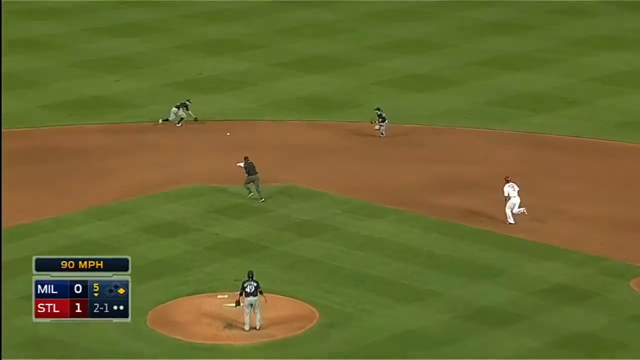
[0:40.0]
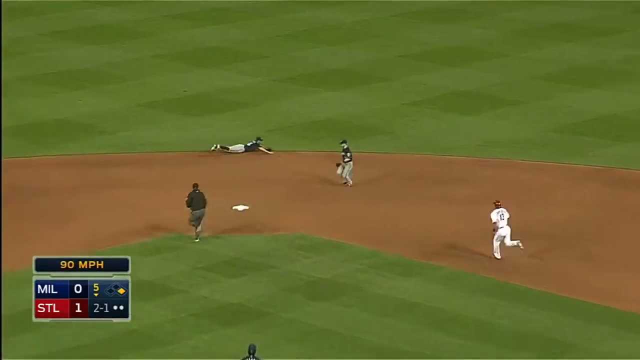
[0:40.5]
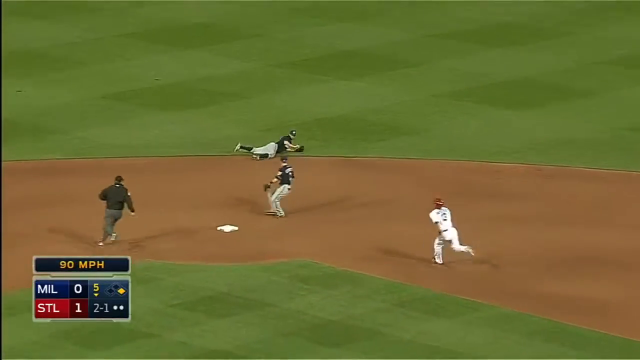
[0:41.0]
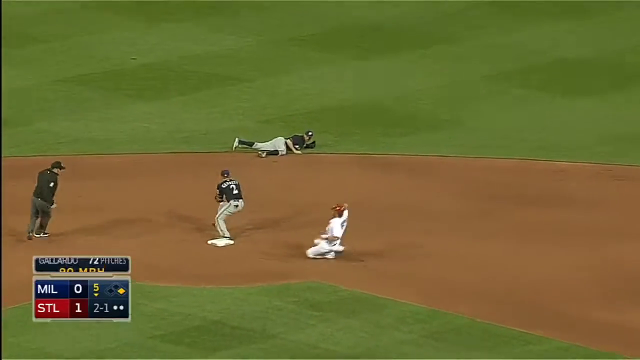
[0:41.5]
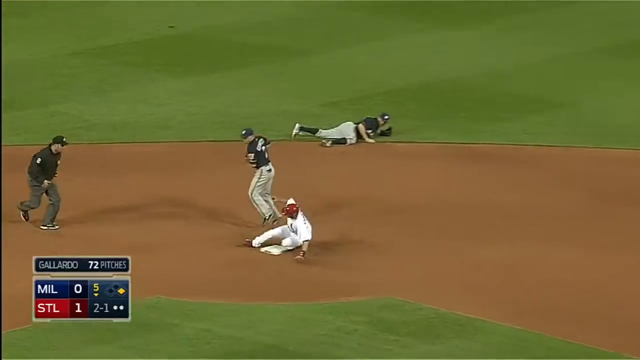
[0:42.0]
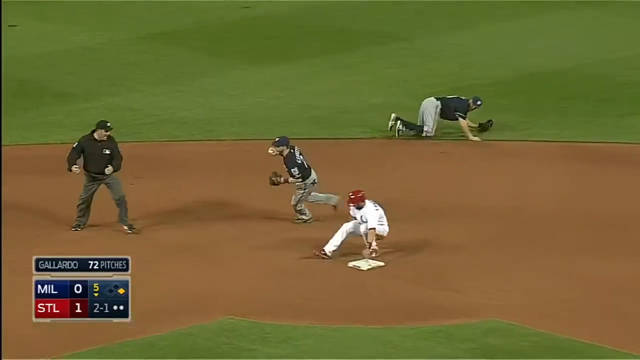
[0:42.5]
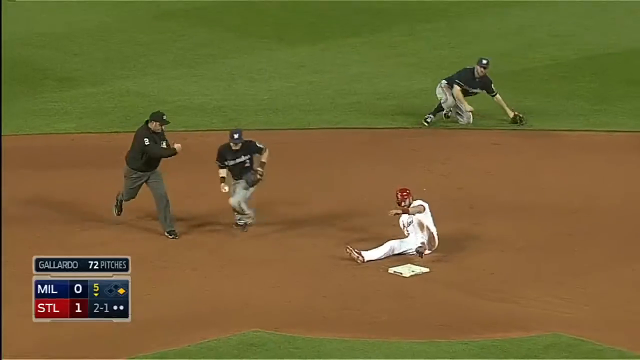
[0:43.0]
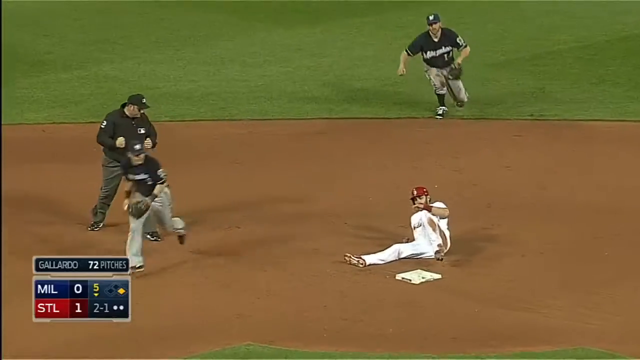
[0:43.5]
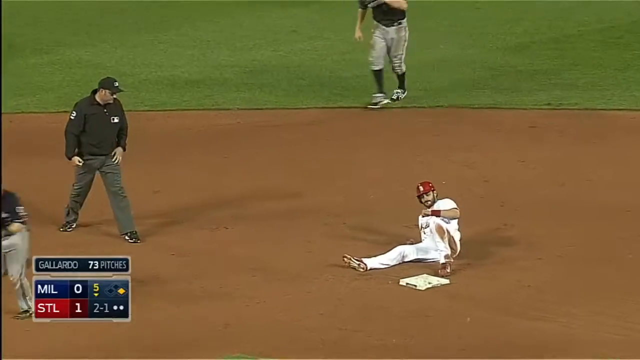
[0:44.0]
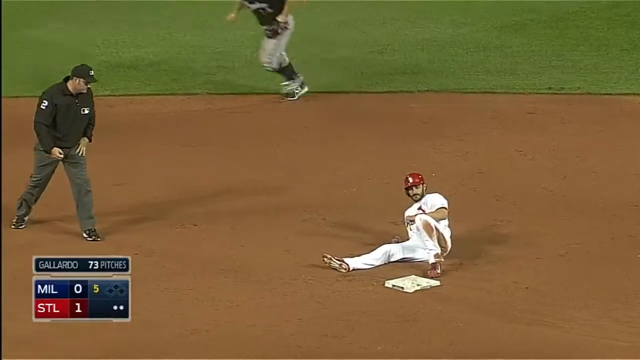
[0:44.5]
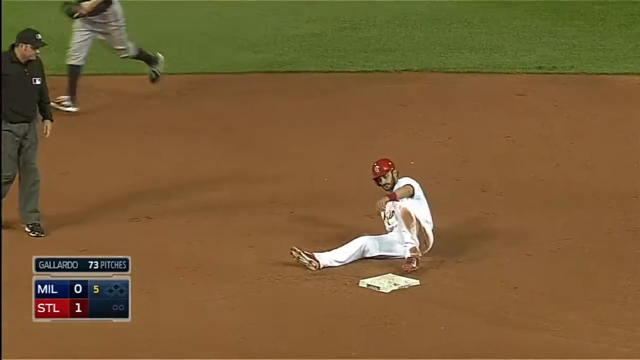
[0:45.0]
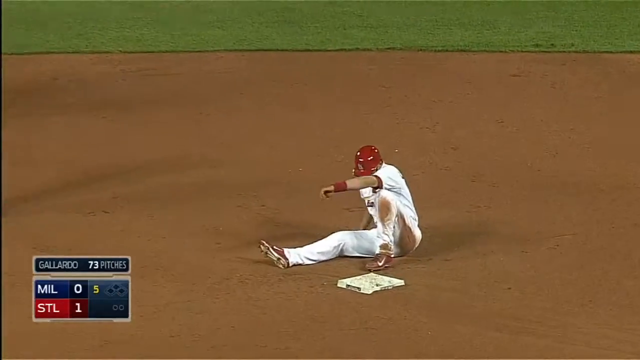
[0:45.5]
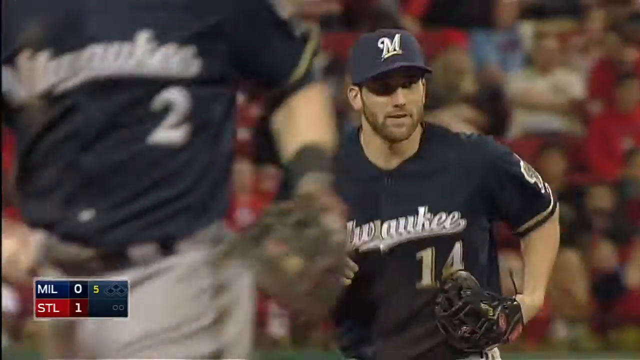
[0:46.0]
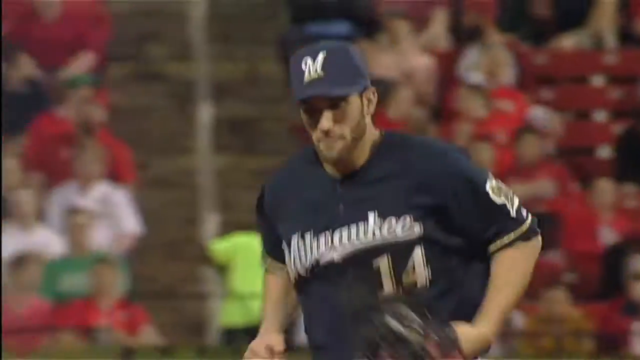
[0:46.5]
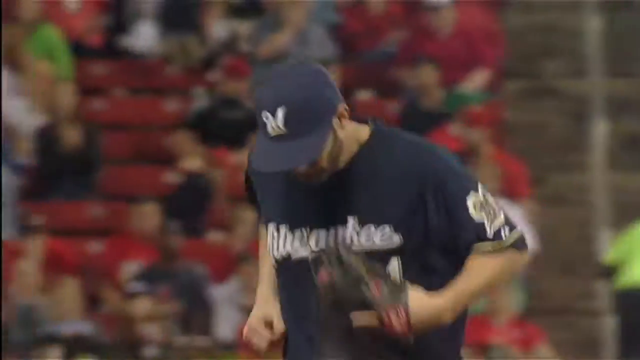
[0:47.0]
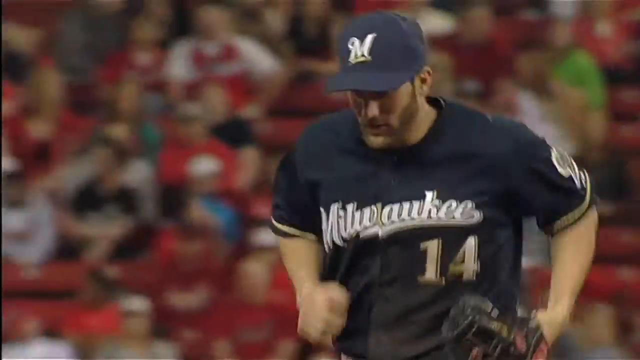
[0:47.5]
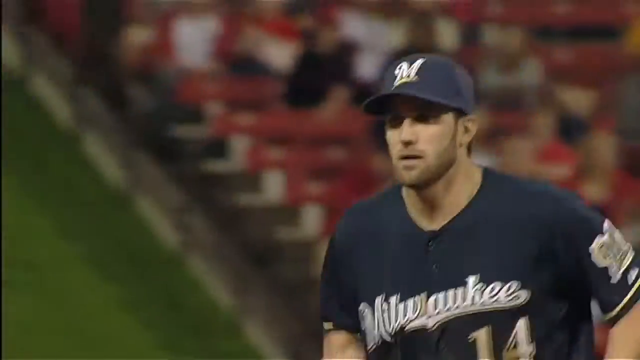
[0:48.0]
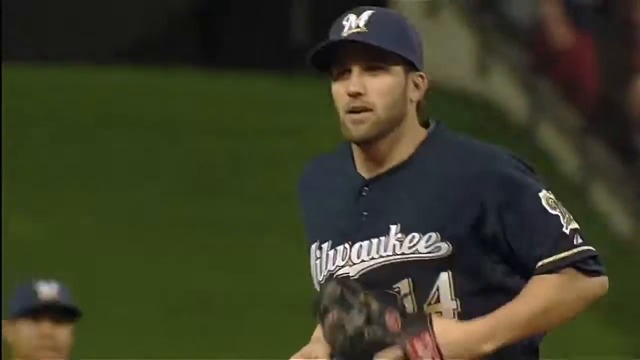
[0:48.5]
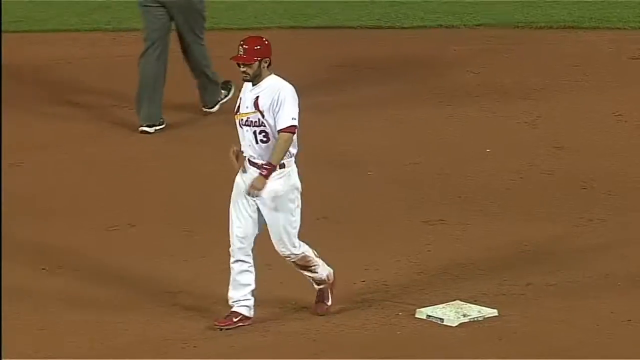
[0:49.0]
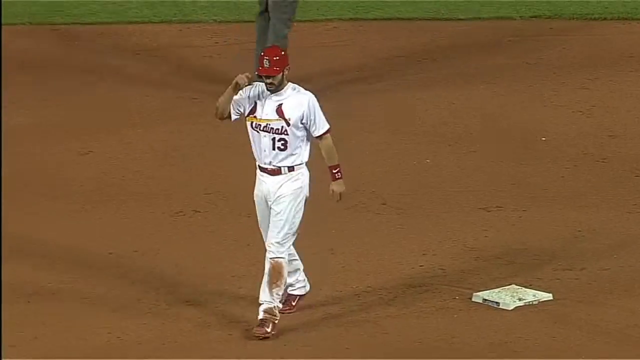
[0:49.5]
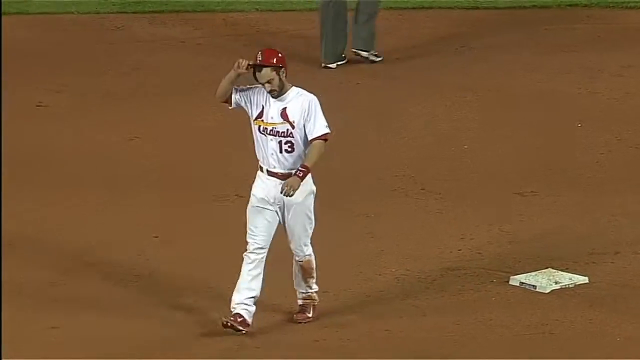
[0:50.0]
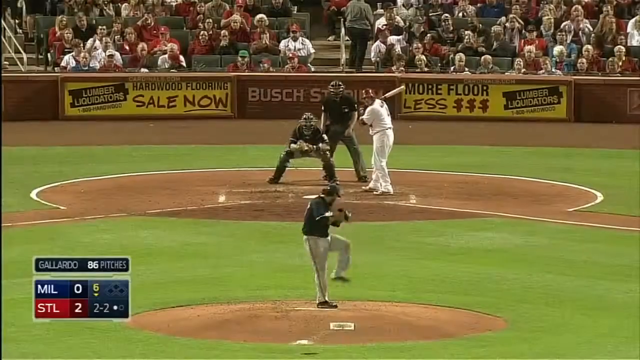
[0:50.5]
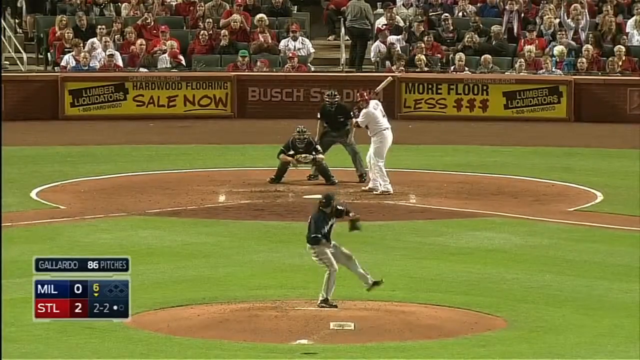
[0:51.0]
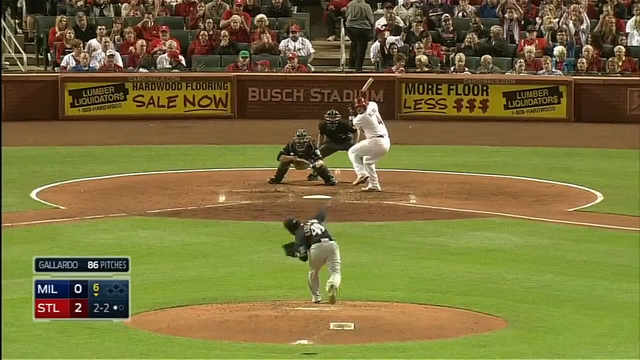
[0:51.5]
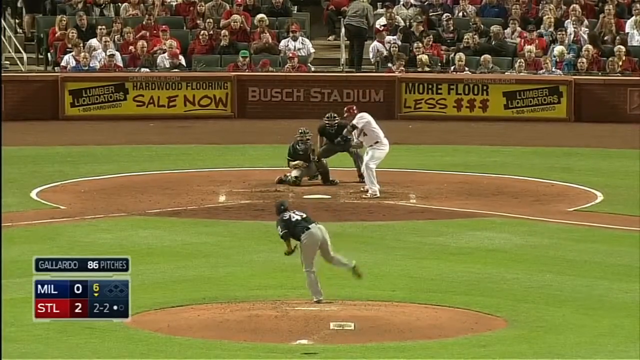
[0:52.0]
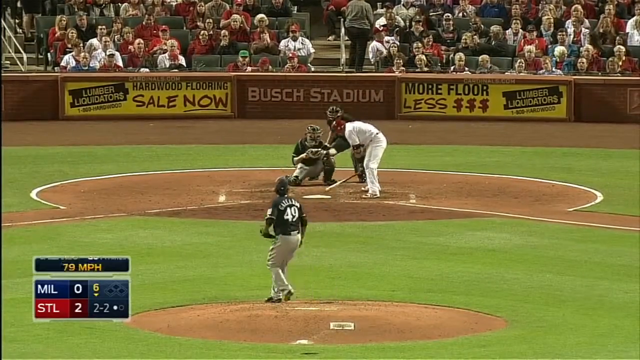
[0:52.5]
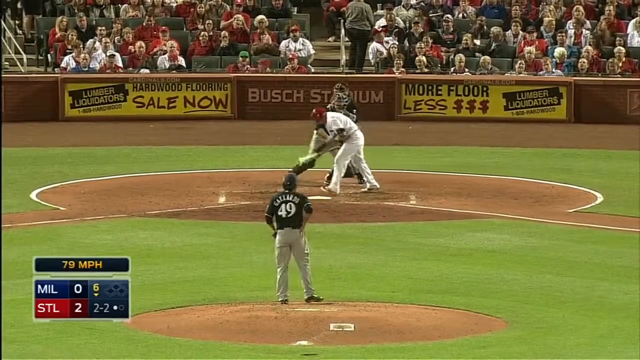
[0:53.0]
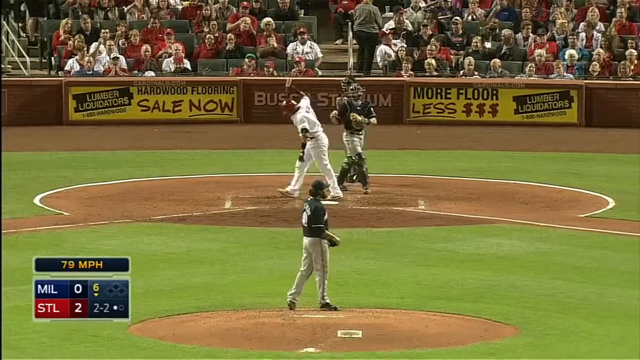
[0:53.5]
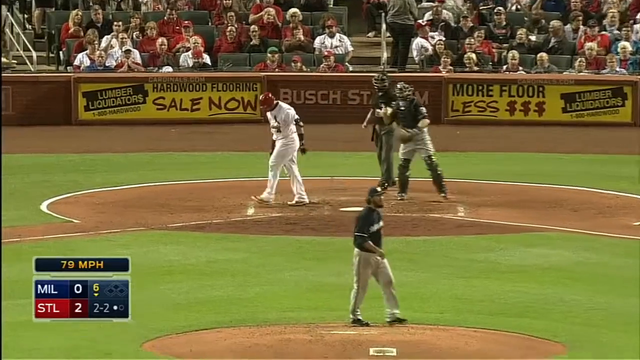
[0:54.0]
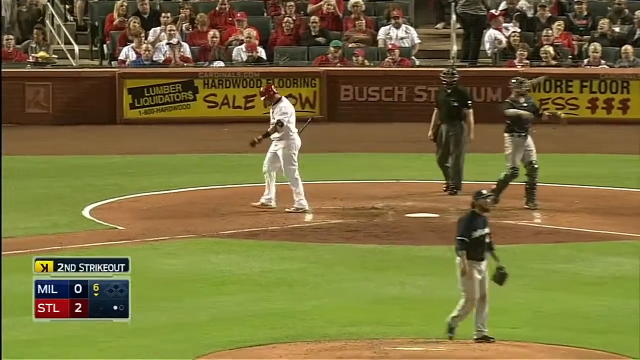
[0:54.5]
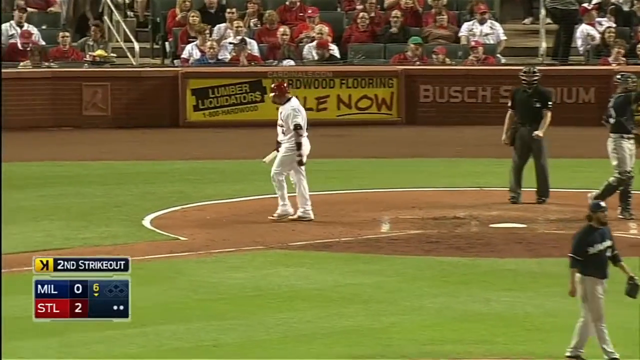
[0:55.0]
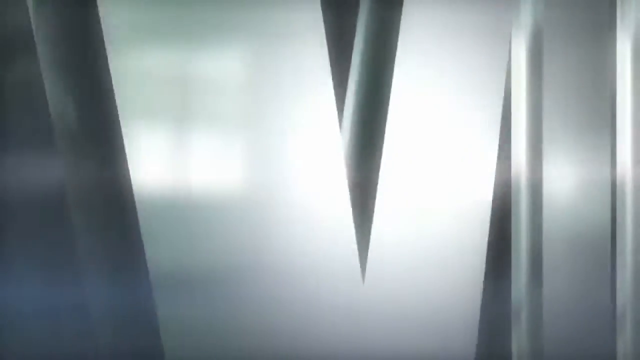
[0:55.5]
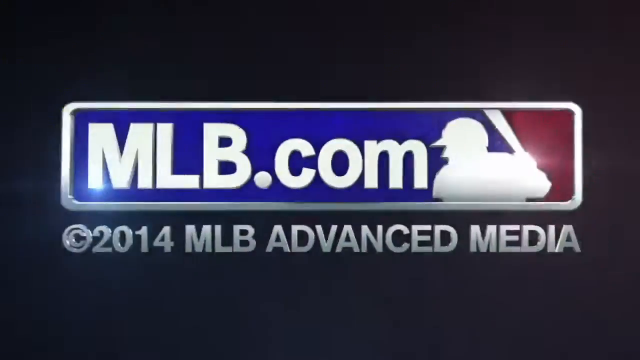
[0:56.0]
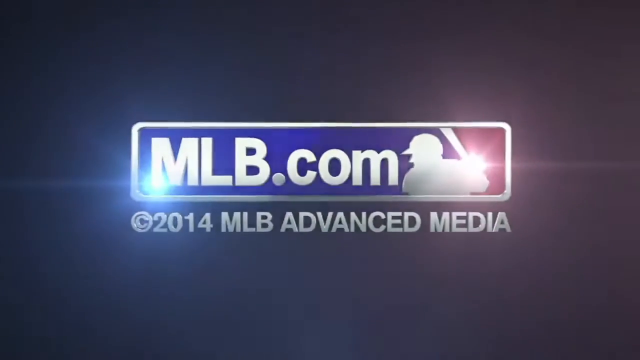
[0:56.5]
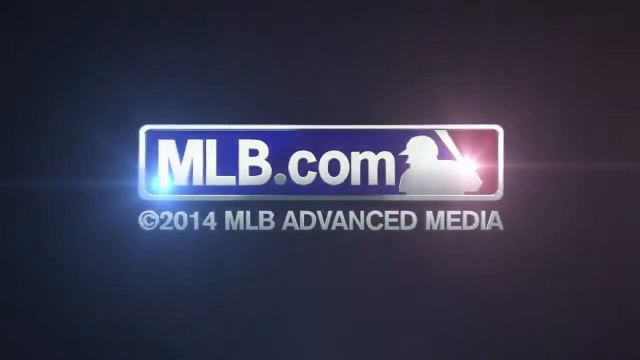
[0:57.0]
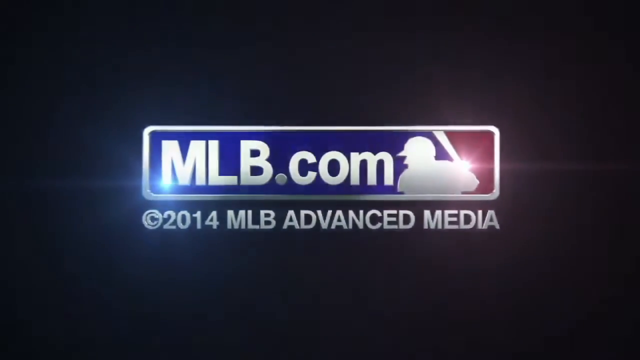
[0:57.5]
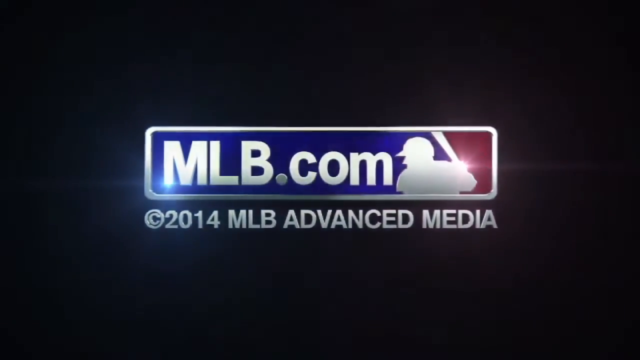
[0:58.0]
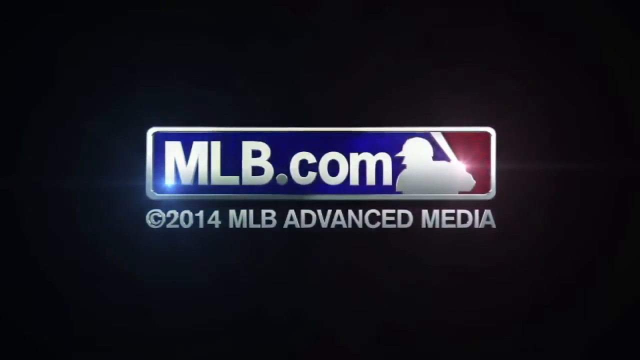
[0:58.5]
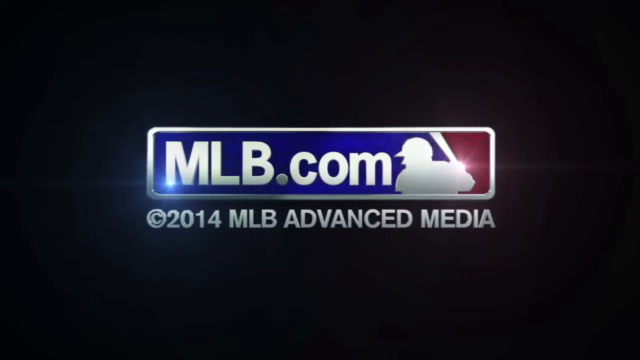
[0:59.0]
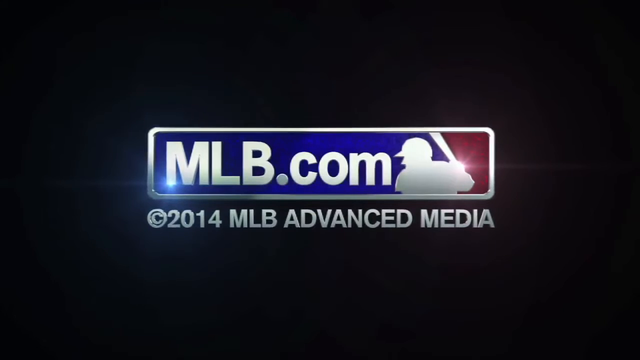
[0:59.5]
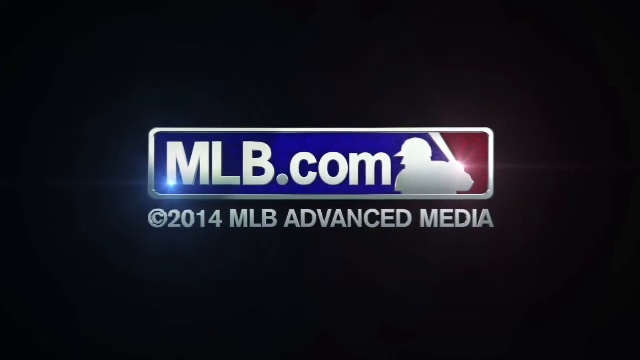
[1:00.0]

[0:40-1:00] A Cardinal tries to reach the base, but a Milwaukee player throws the ball and he is out, as the umpire calls. The Cardinal, who has fallen on the ground and is a little dirty, sits with his leg out and is about to get up. The Milwaukee players run off the field. The Cardinal walks and takes off his hard hat with his right hand, kind of grabbing it off his head, looking very frustrated. The signs on either side of the Bush Stadium sign now advertise Lumber Liquidators with "hardwood flooring sale now". An MLB.com sign comes onto the screen with the text "© 2014 MLB Advanced Media", then the sign sets into the screen and the background becomes black.